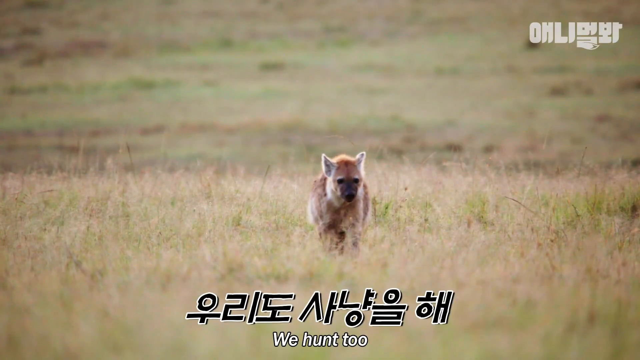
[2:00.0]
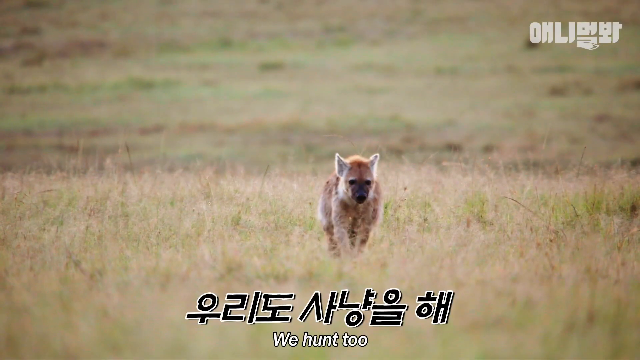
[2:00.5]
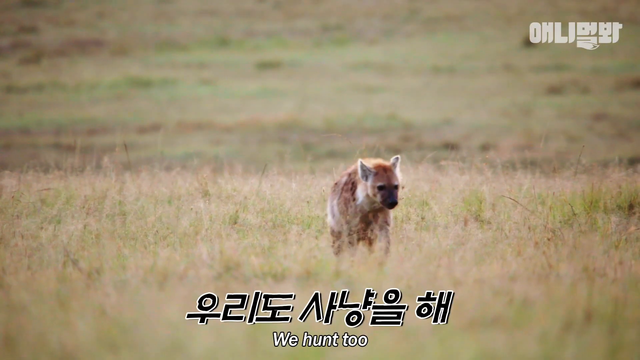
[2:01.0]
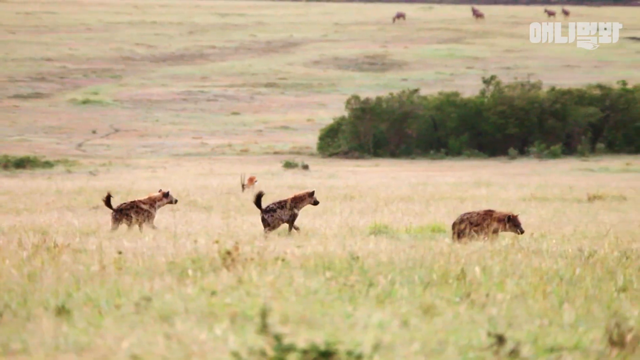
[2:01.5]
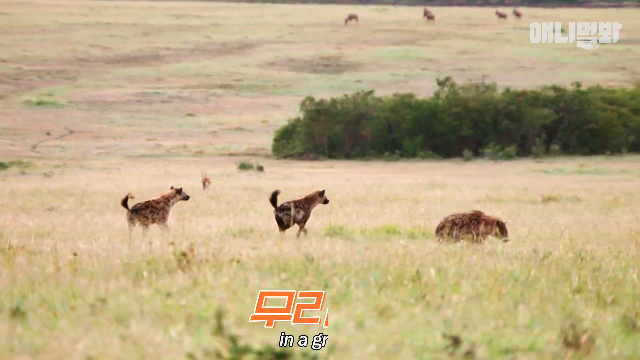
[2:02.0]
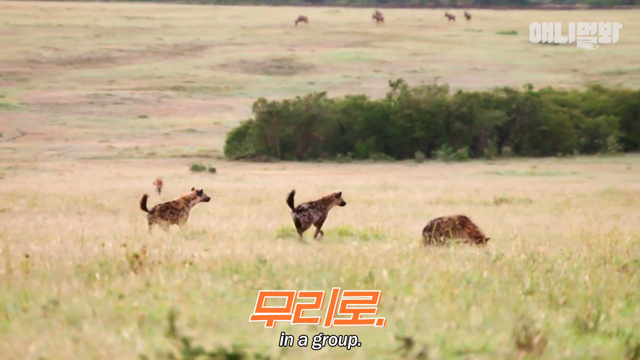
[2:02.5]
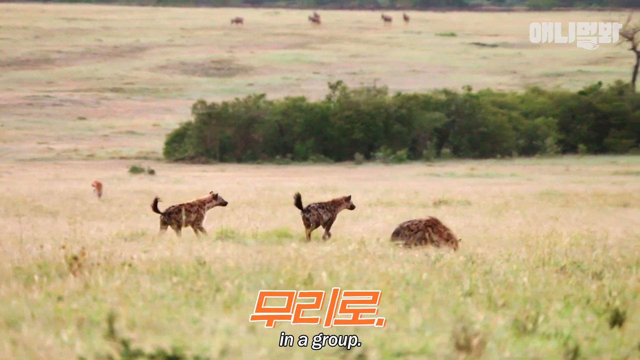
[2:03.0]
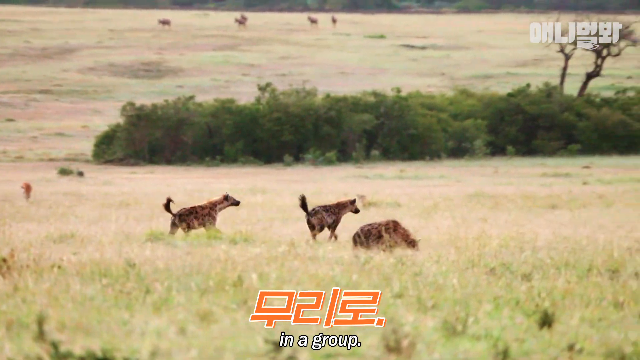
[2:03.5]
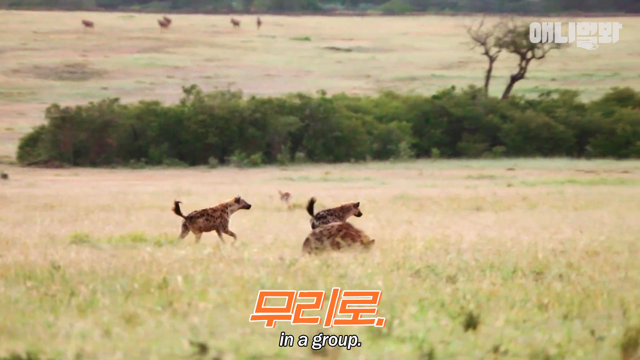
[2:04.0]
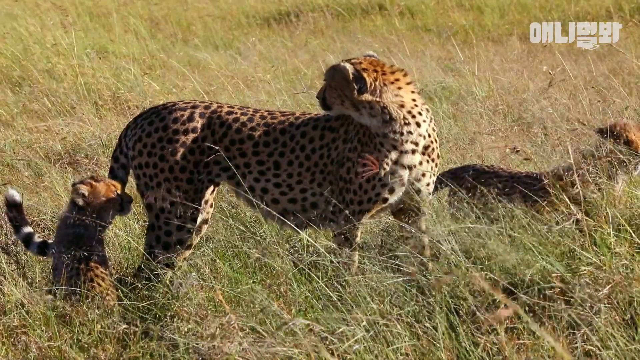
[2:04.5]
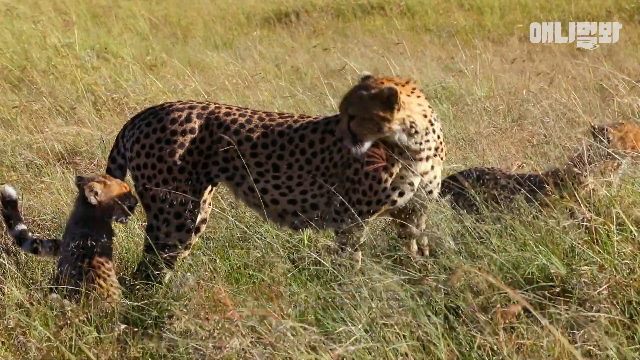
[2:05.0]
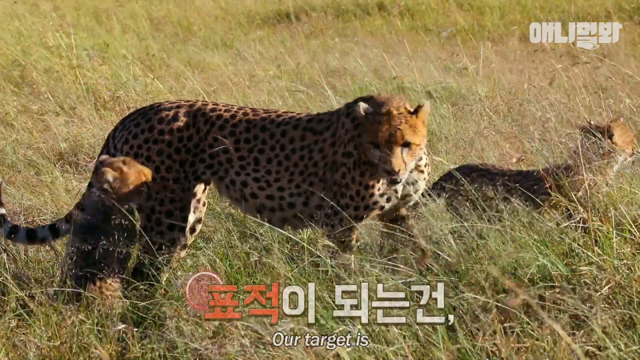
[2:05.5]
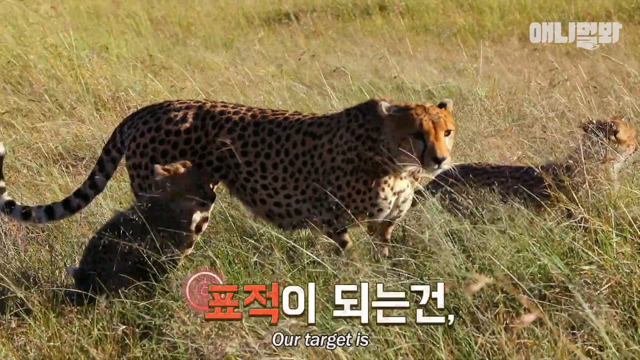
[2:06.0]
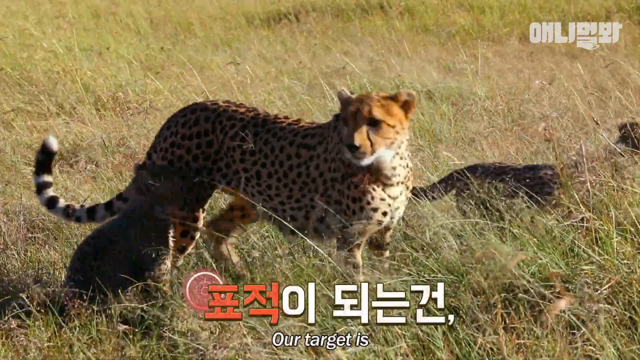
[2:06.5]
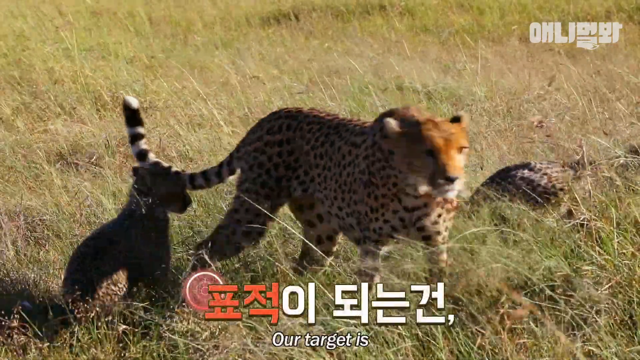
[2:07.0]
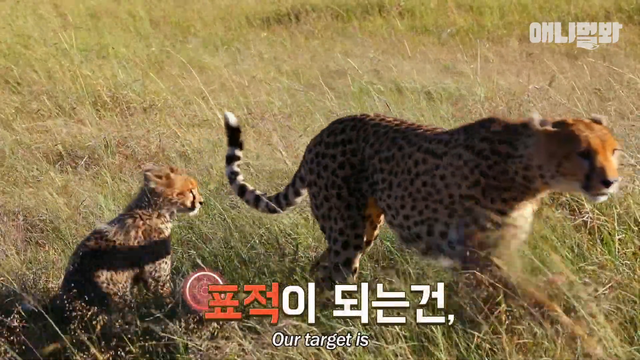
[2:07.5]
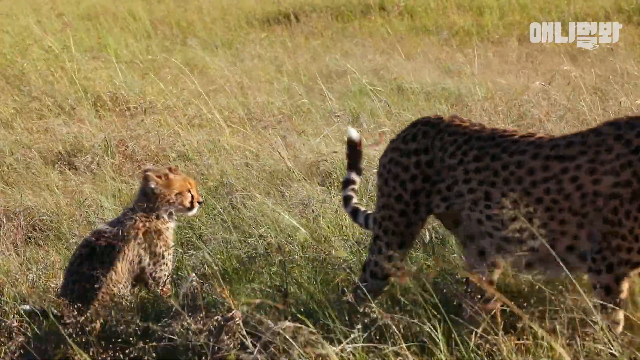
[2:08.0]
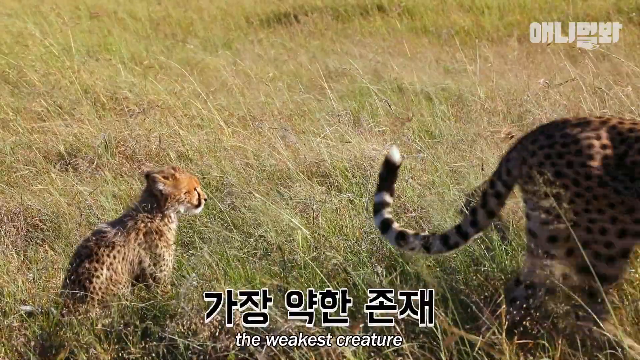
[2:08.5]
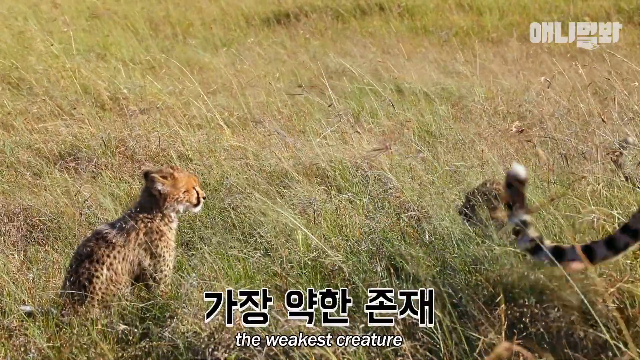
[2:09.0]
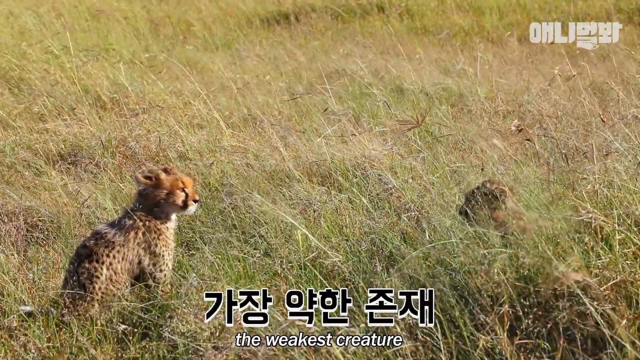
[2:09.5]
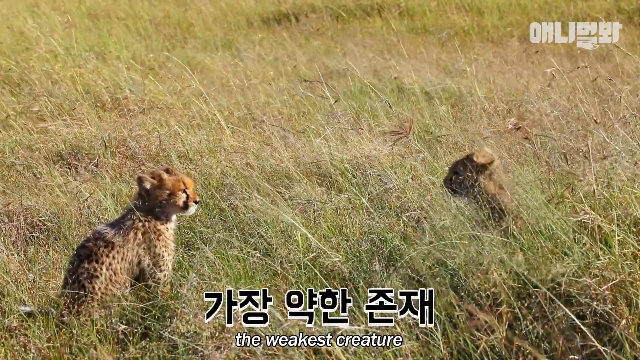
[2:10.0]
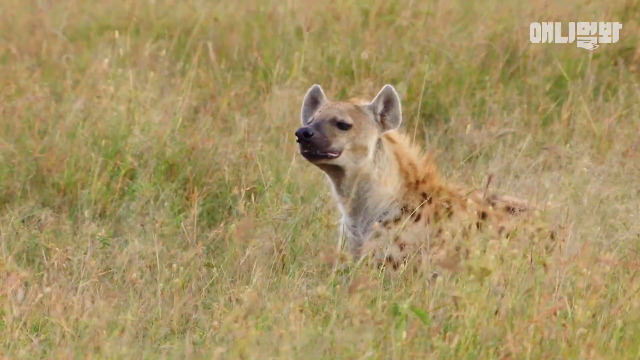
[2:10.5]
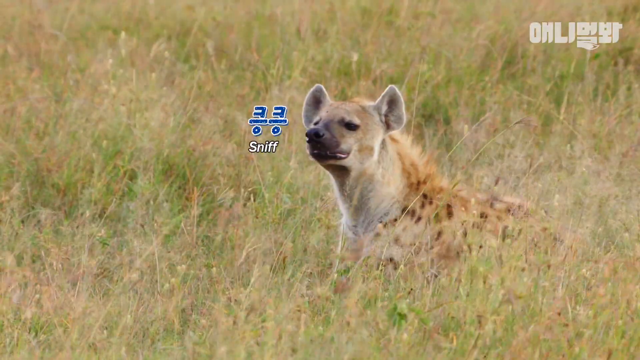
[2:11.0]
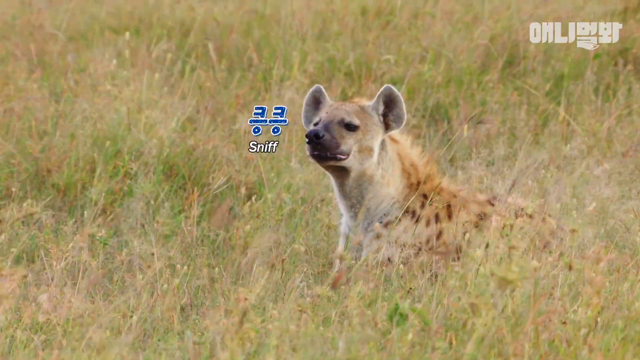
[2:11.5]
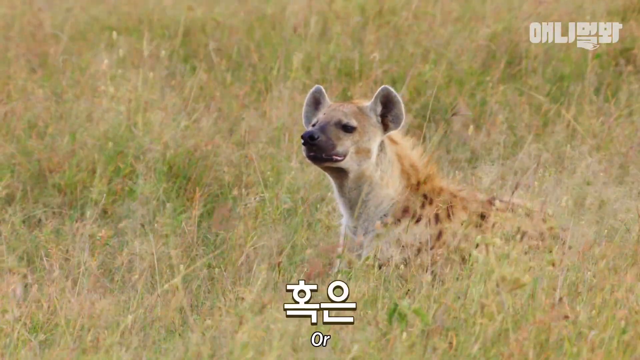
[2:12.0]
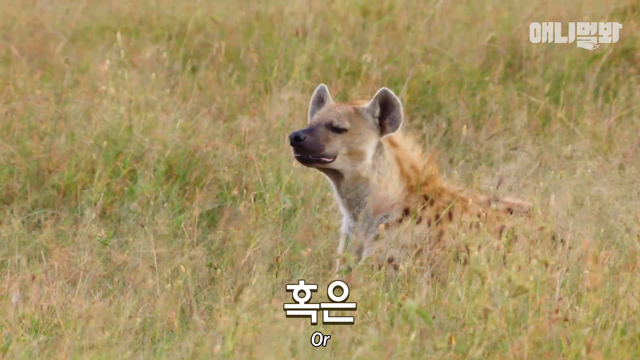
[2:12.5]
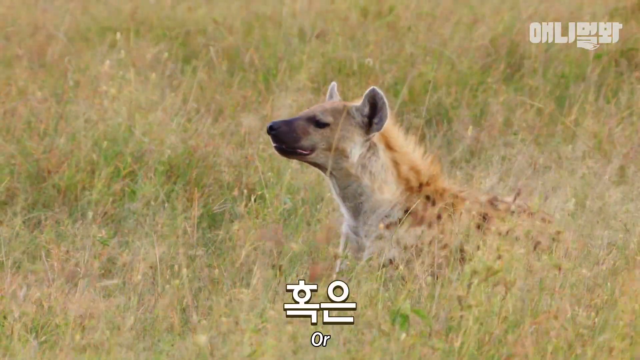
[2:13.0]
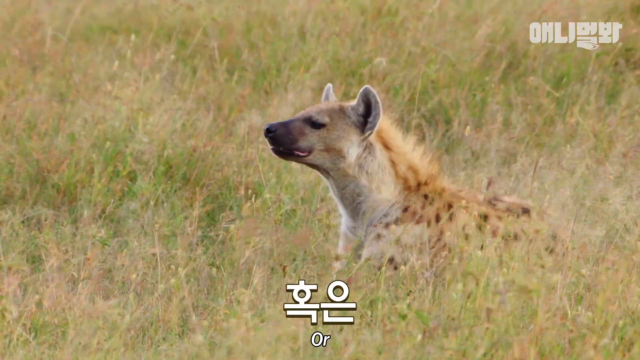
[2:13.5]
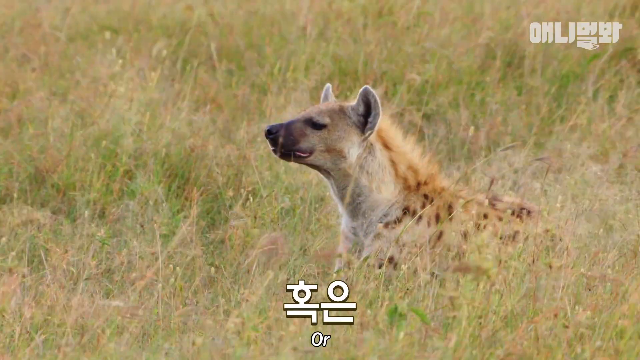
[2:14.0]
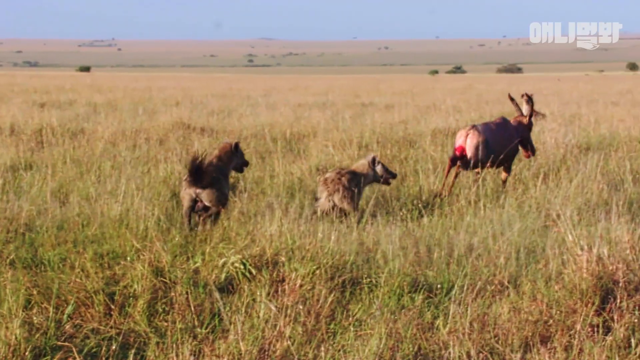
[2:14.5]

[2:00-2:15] Three different kinds of animals appear. The carcass appears to be some kind of antelope. About three antelope run around, while the bigger one seems to be injured in its rear. Various groups of hyenas and lions are also shown. The hyenas eye the group of antelope, apparently as their next prey, and the captions indicate that they are on par with the lions in ferocity.